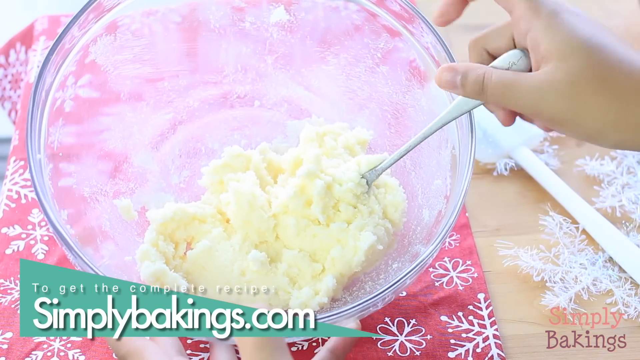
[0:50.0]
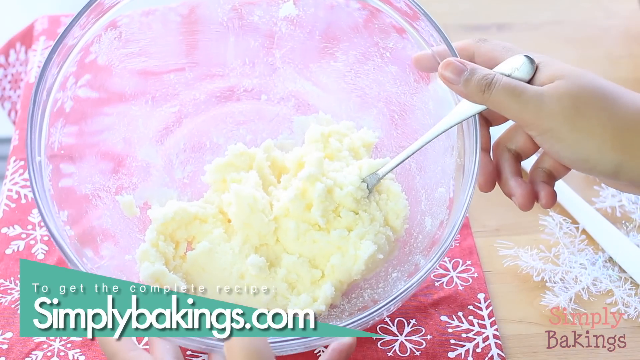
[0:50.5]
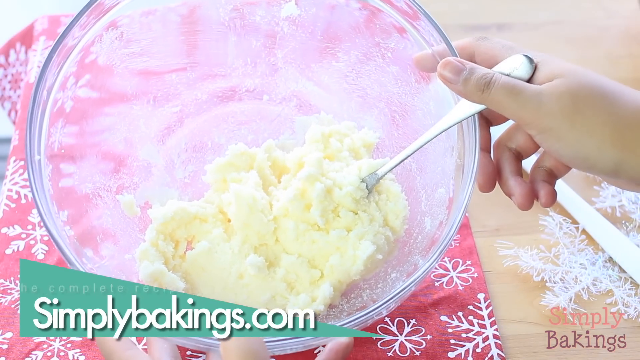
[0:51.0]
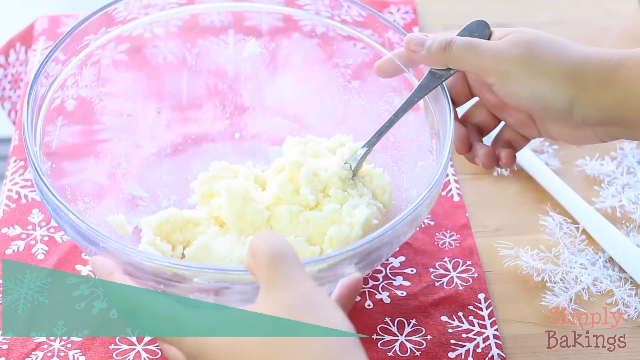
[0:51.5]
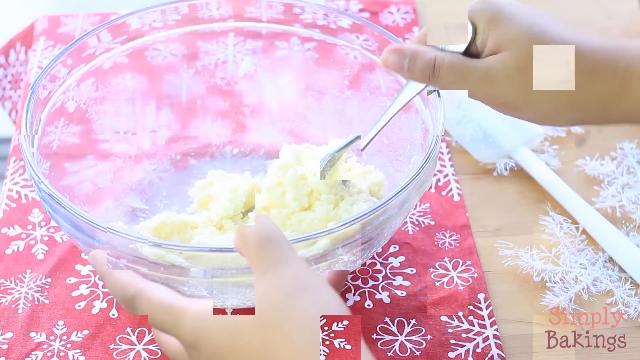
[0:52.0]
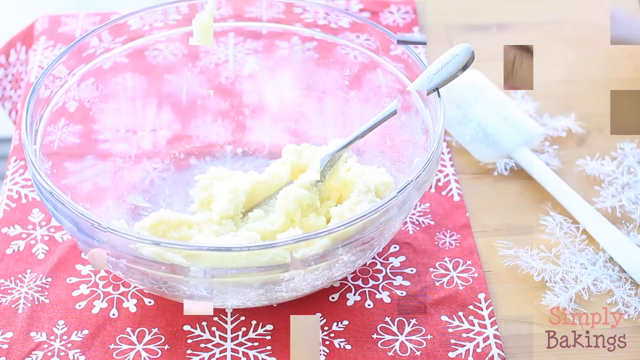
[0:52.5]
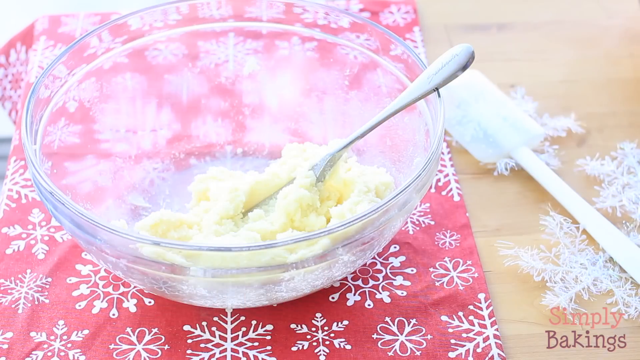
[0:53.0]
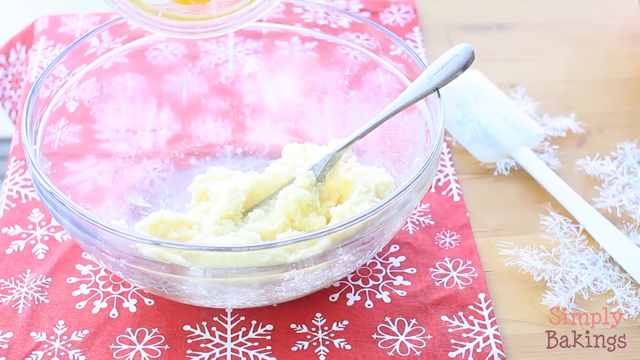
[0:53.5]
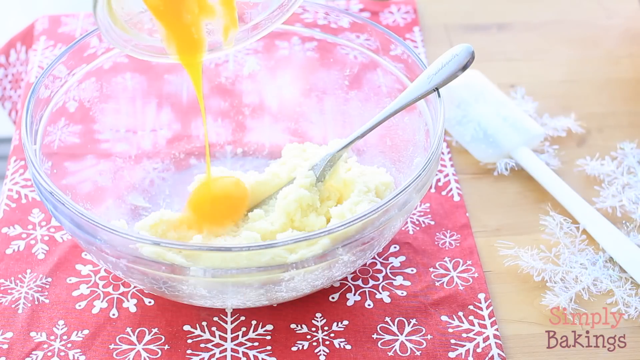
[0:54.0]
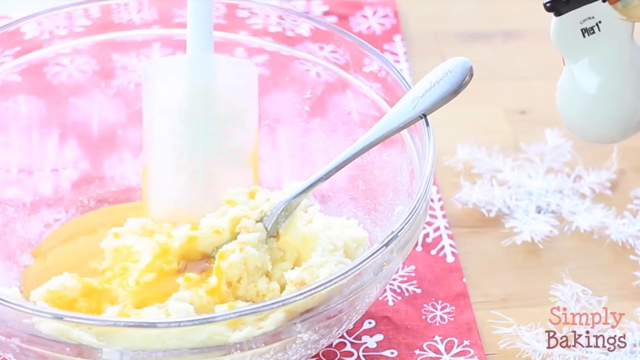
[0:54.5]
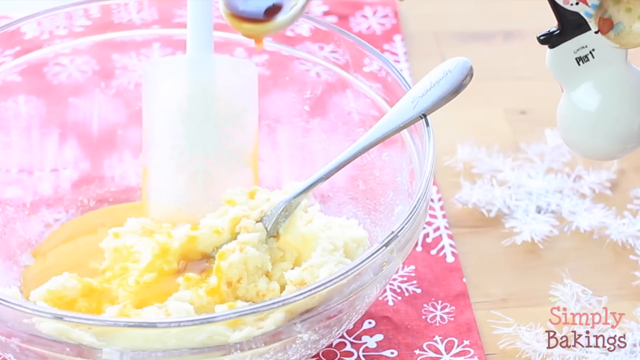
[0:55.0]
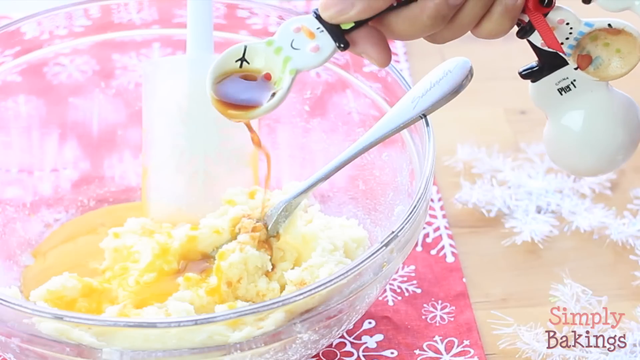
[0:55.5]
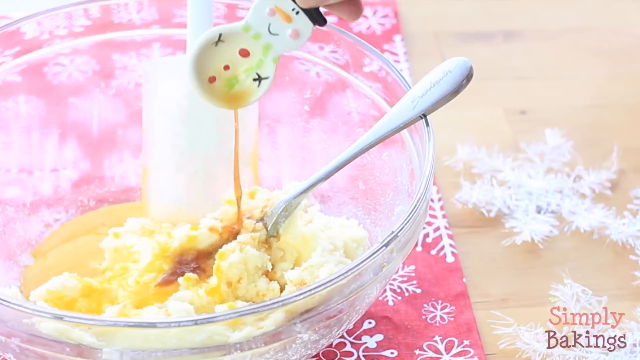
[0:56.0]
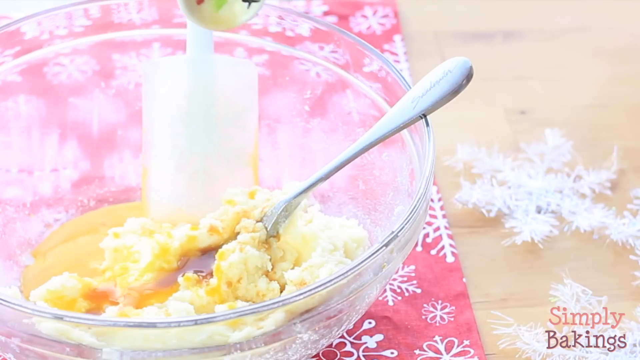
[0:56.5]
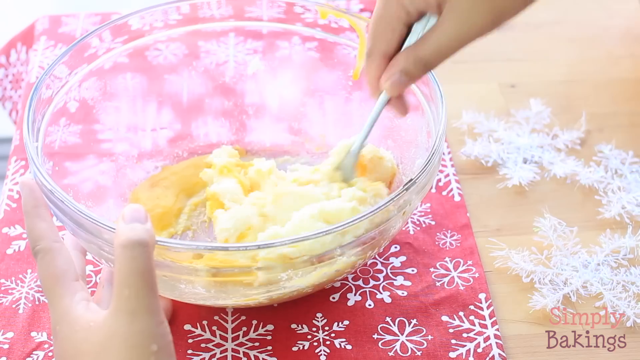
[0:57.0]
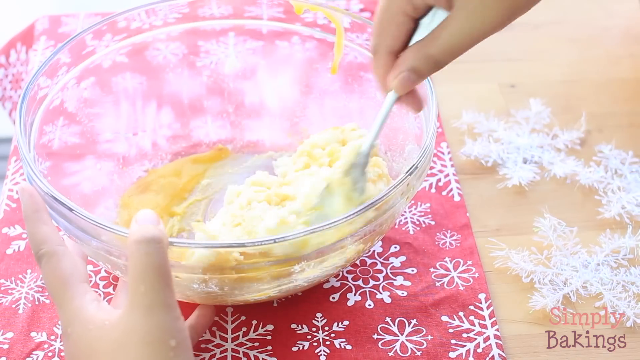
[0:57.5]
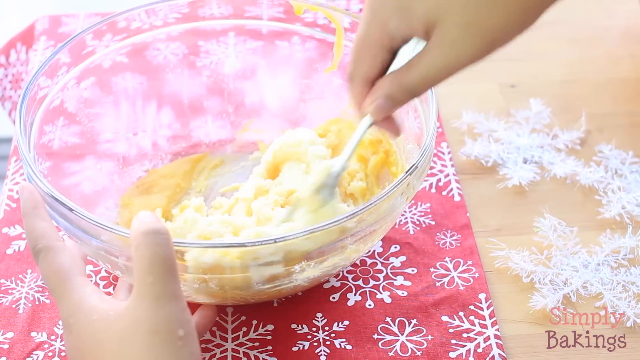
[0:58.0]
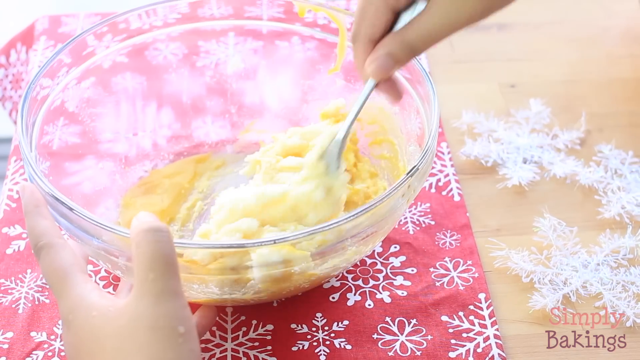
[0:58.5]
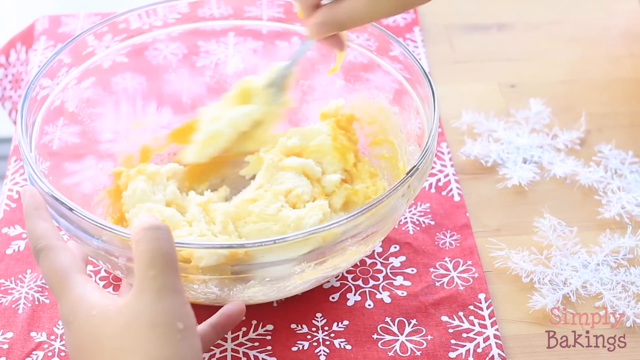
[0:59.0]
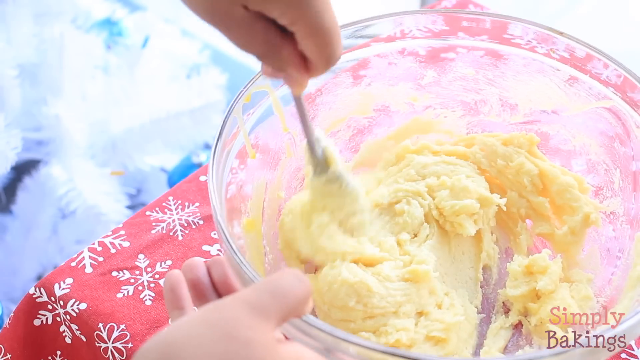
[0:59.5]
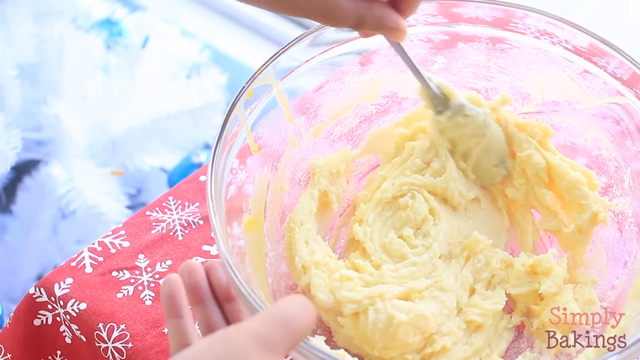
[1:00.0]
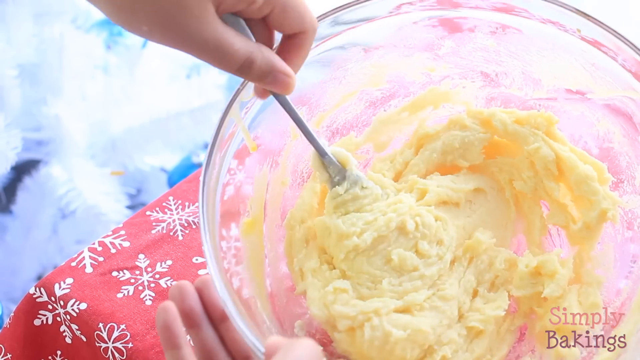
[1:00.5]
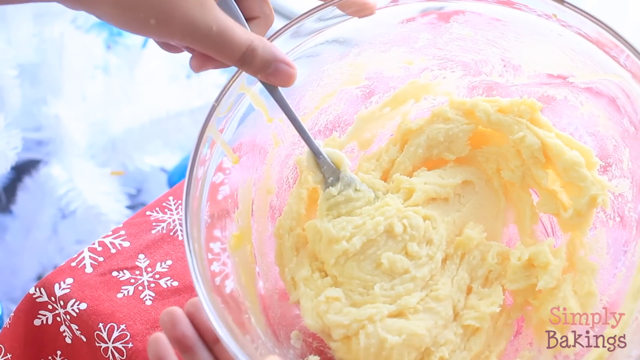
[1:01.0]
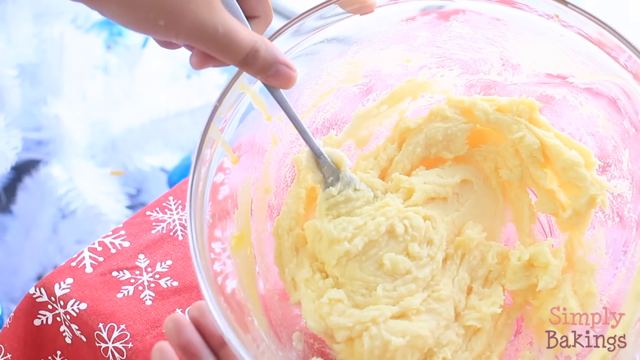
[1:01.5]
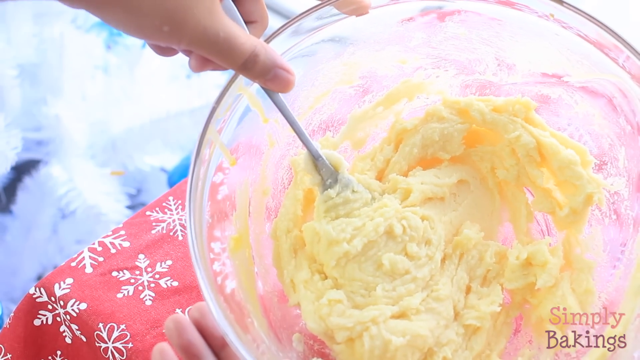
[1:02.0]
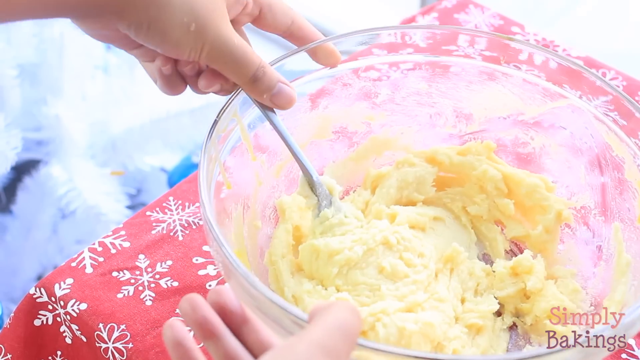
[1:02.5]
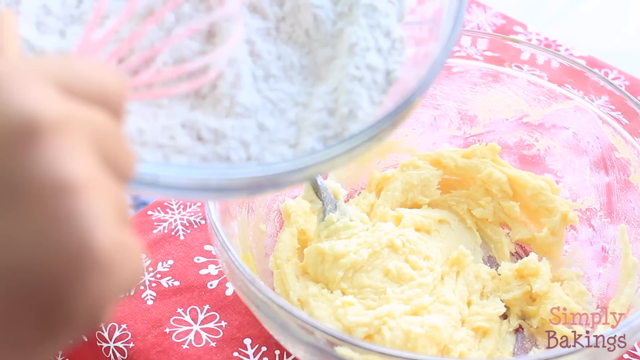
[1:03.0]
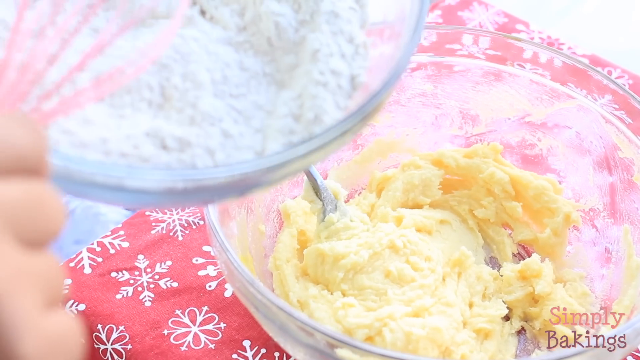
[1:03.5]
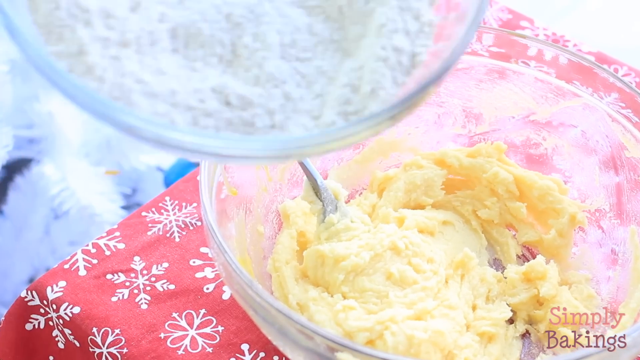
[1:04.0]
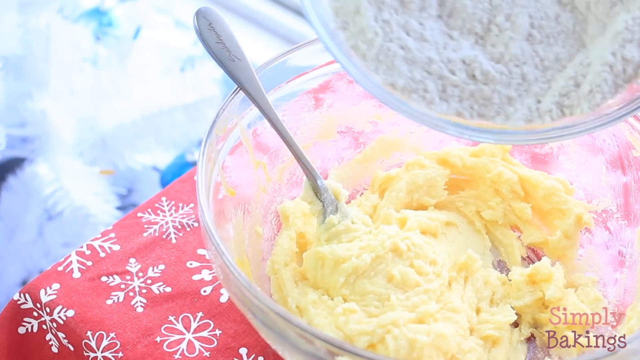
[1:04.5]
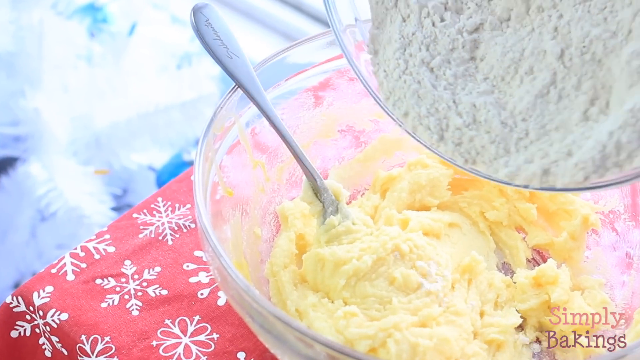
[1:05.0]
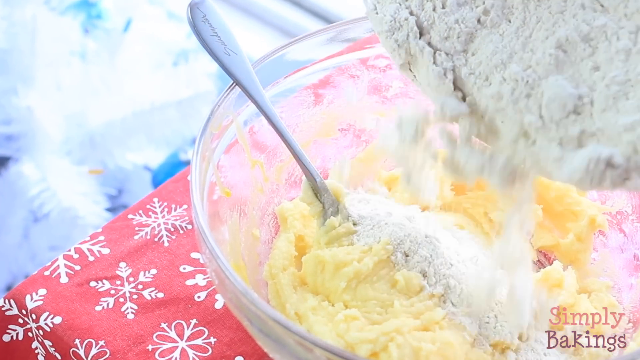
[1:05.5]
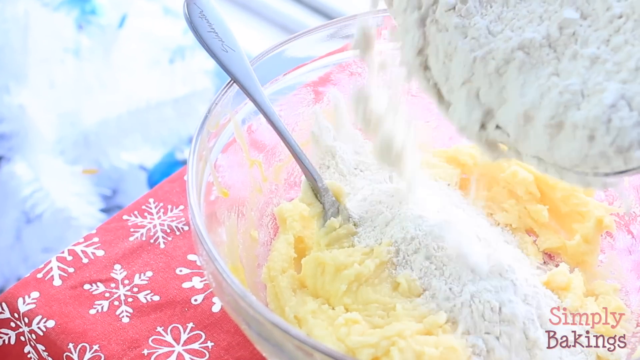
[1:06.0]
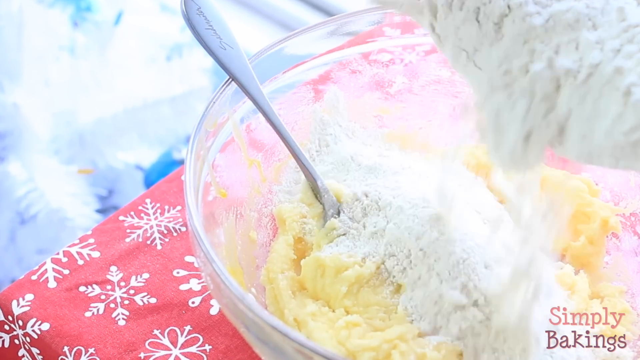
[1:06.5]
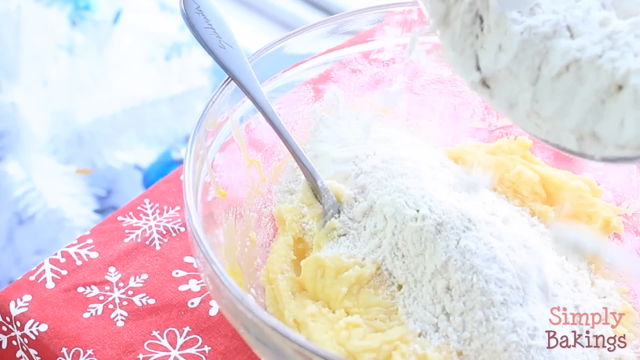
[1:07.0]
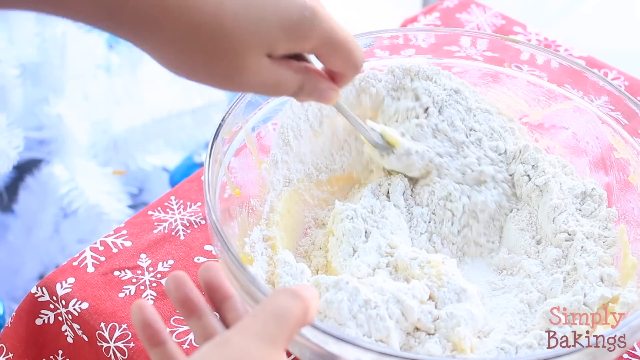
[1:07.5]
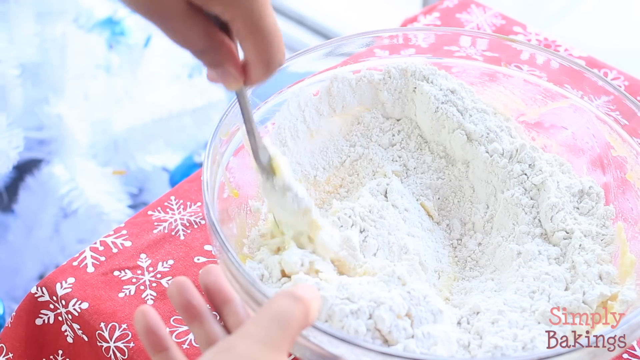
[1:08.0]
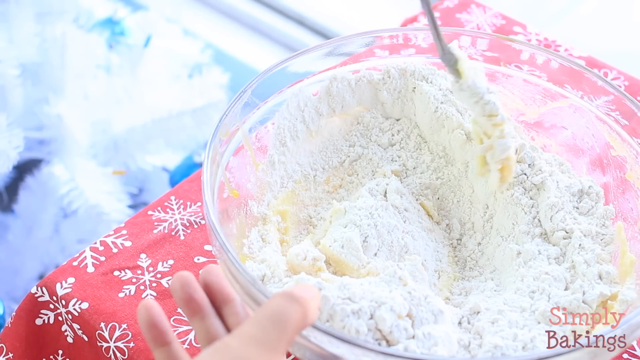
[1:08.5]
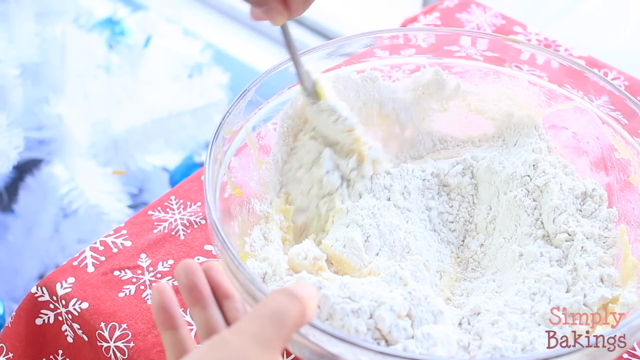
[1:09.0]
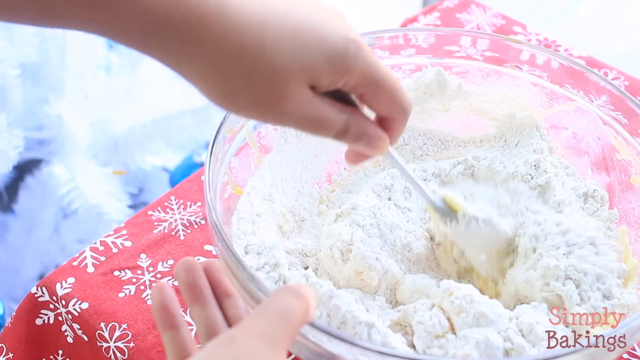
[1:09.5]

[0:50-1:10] The sugar and butter crumble mixture is ready. An egg yolk, separated from the egg, goes into the butter and sugar crumble mix, and a measuring spoon is used to add vanilla extract. A fork incorporates these wet ingredients into the butter and sugar mixture. Then a dry flour mixture is added, and everything is mixed together with the same fork.